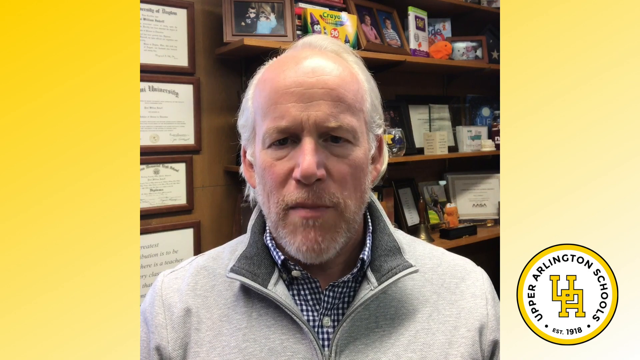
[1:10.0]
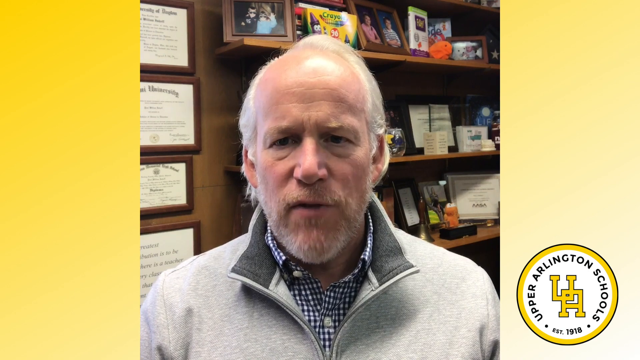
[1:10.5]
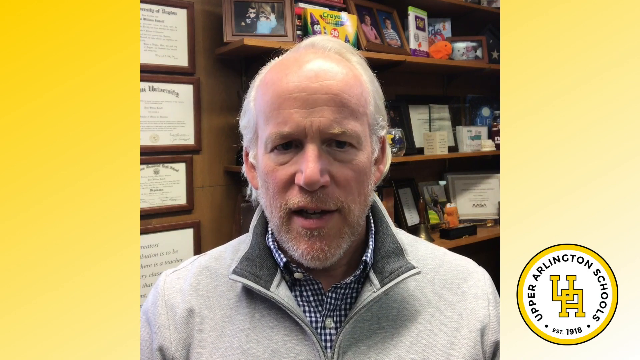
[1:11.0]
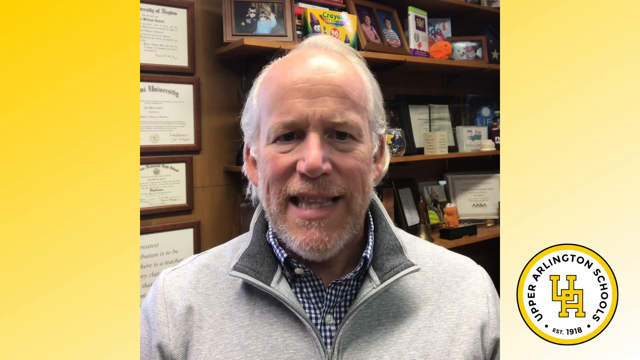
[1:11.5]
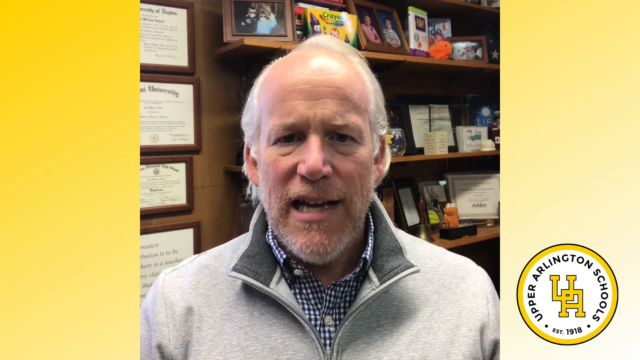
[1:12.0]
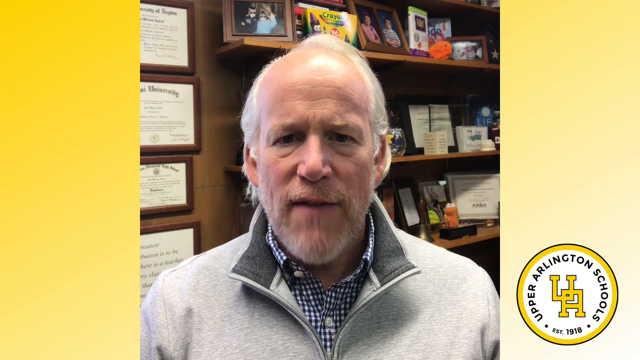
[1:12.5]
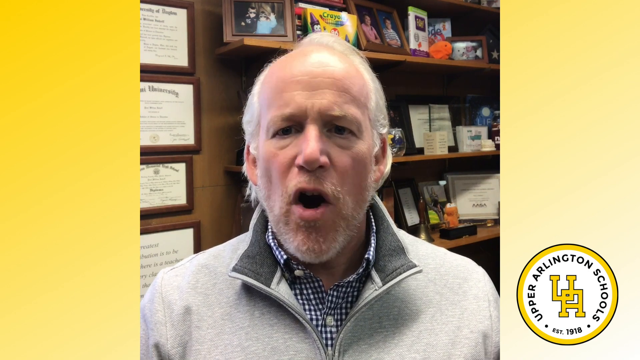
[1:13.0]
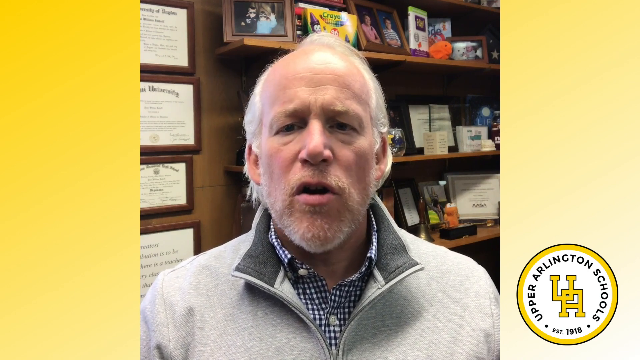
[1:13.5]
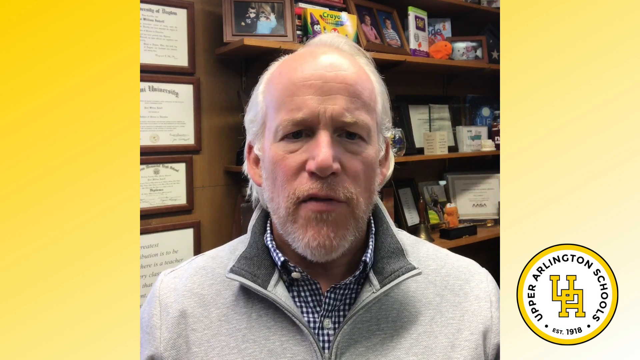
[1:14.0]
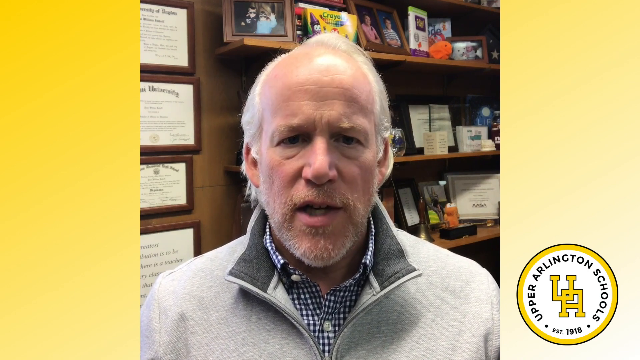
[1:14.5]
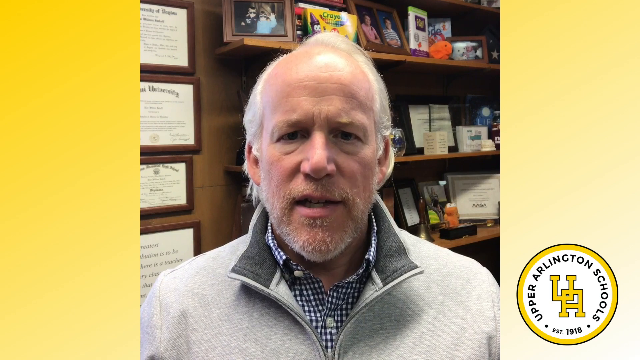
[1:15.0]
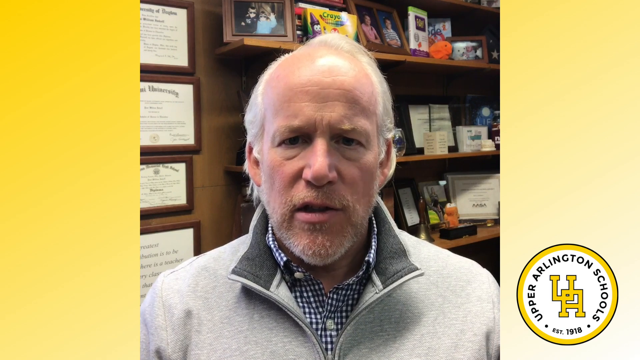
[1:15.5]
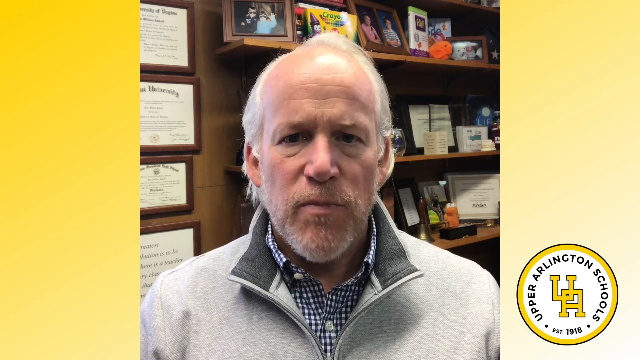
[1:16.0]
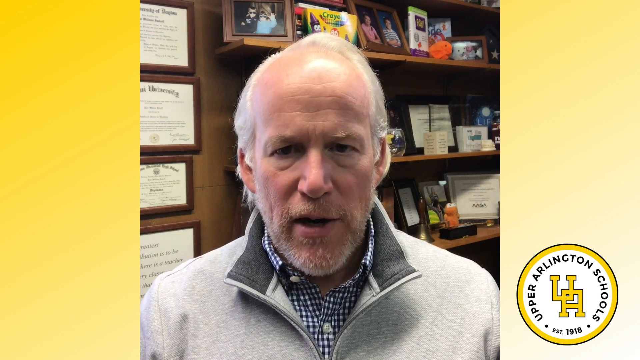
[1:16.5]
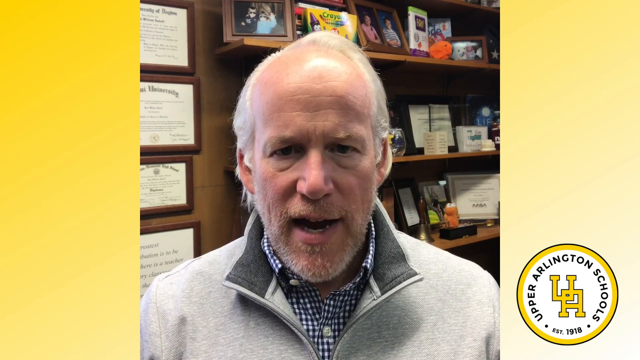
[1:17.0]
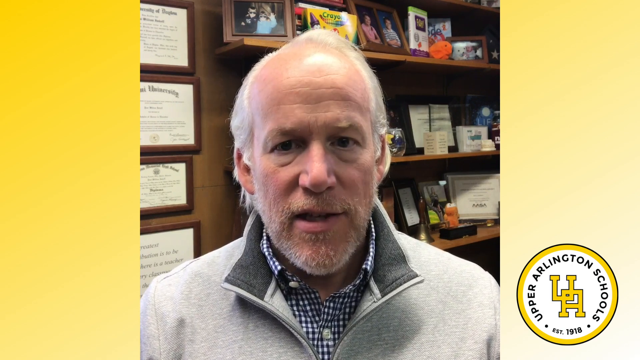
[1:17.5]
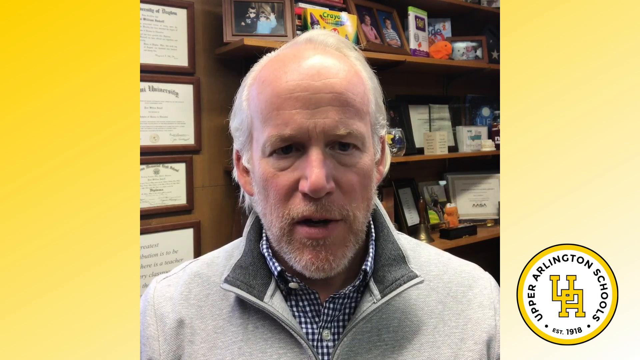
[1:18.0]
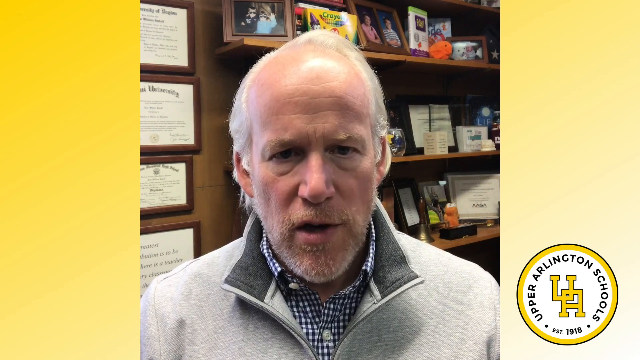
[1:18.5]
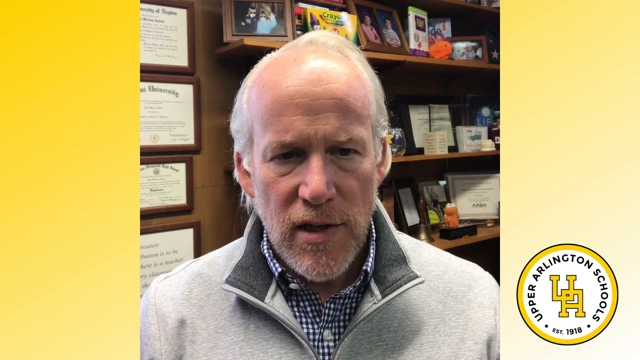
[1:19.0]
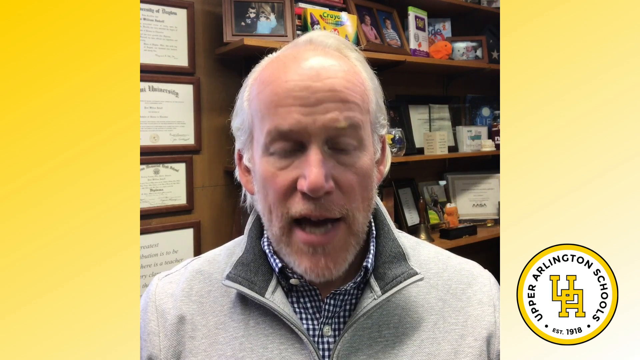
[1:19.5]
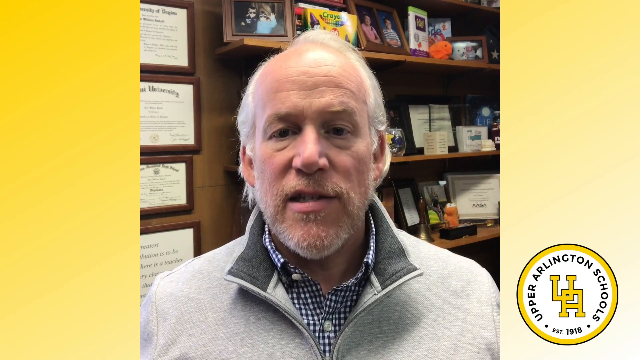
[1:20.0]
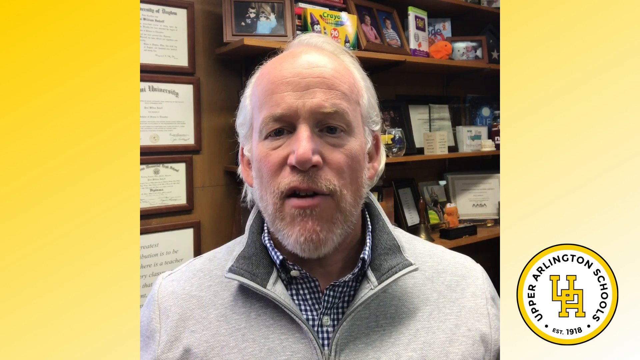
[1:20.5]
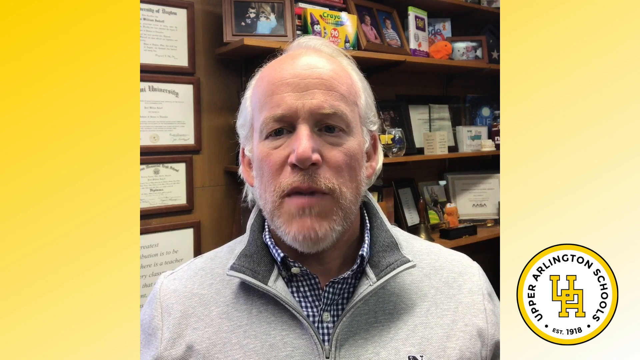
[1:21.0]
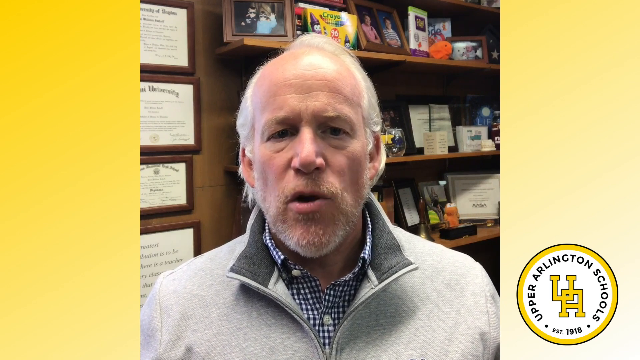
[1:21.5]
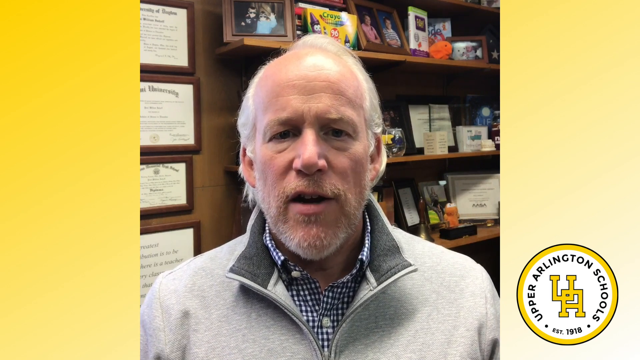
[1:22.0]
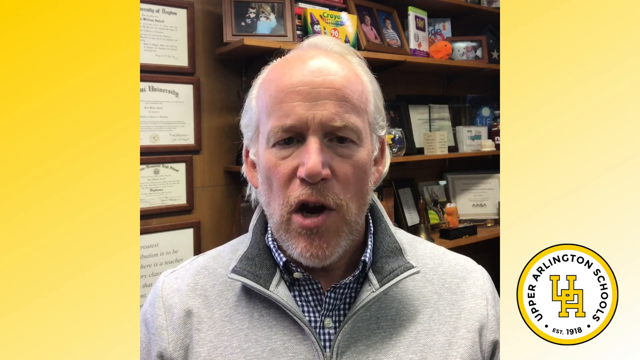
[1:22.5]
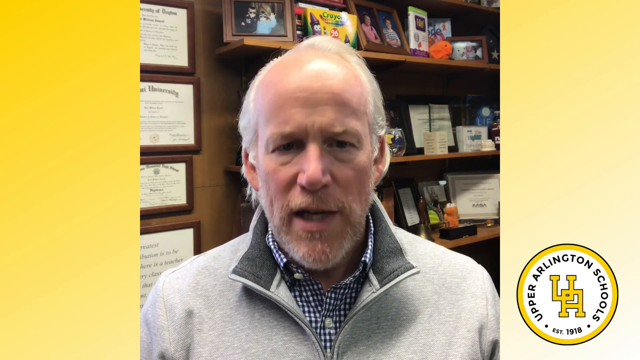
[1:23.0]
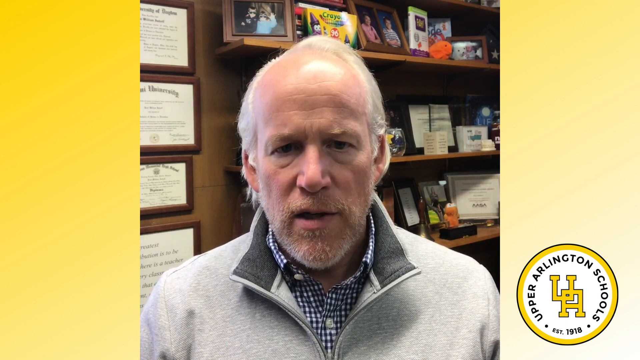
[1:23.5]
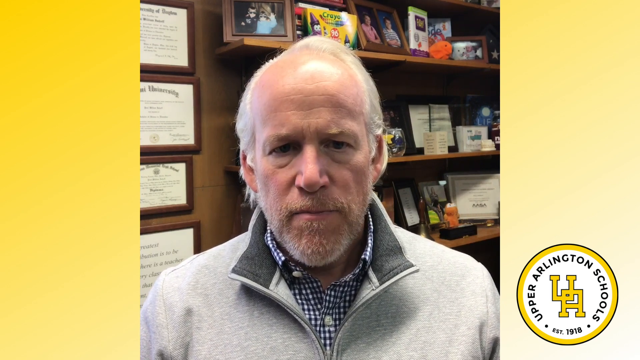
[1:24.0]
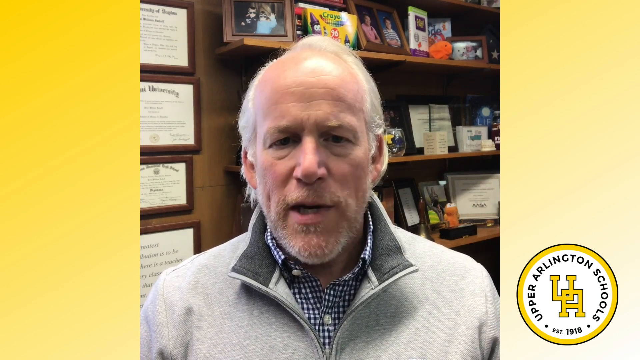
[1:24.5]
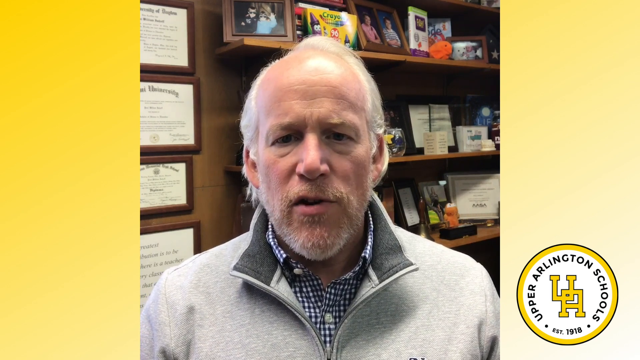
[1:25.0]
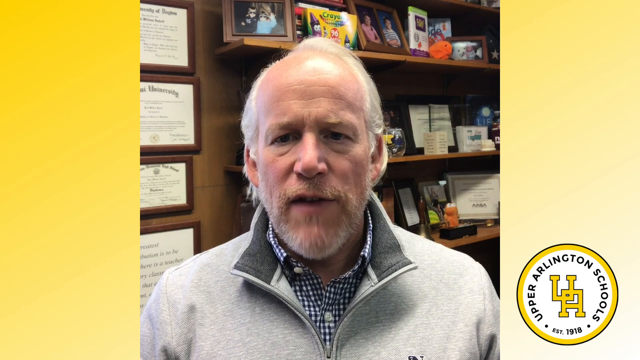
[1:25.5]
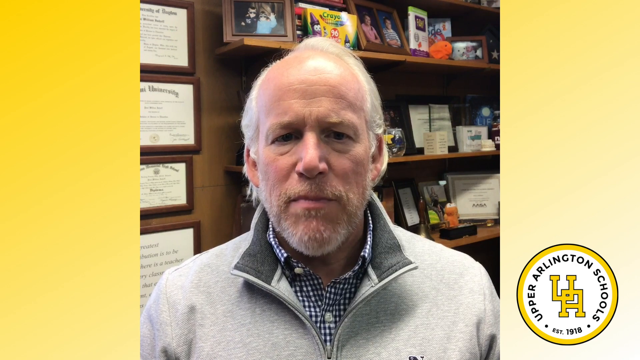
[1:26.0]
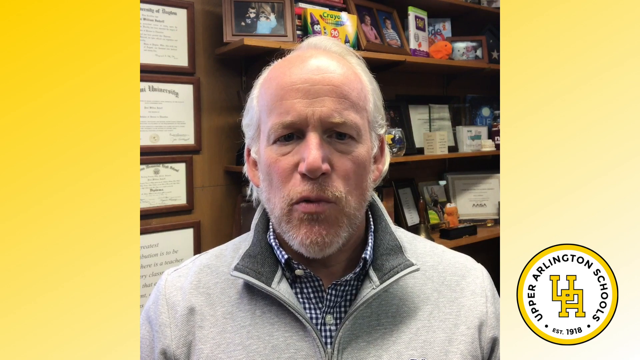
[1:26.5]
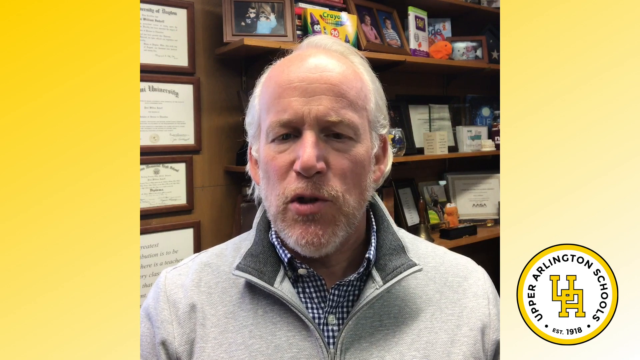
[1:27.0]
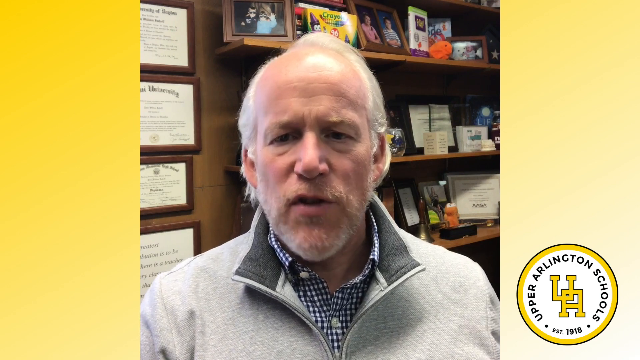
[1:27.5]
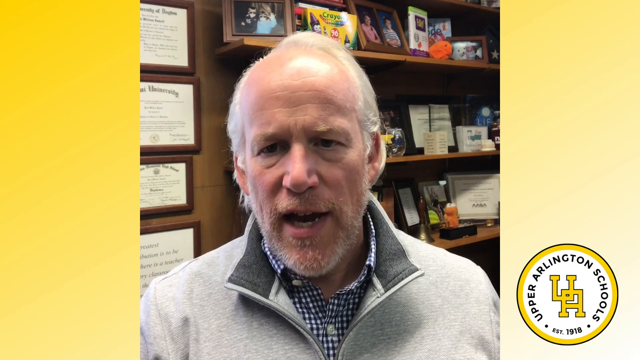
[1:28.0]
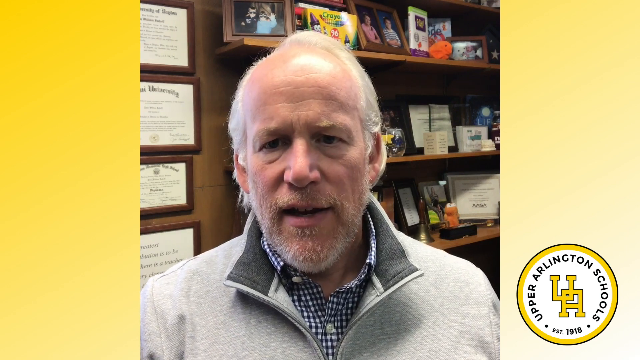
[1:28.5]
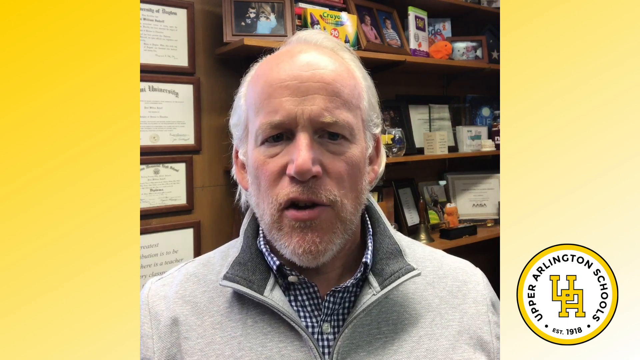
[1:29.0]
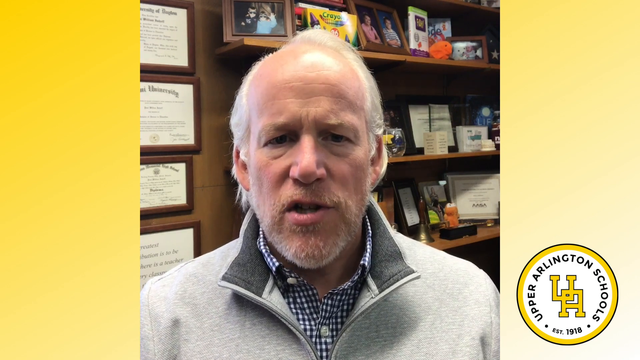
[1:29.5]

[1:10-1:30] The older man is shown against a yellow and white gradient background. In the corner is the school emblem, a circle with a bold black outline and a thicker yellow outline, reading "Upper Arlington Schools" with "EST" at the very bottom and "1918," plus a yellow U and a yellow A. Behind him are shelves holding pictures and what look like awards, with some diplomas or awards toward the left of the shelves. He is dressed in a gray jersey and a checkered shirt and talks to the camera, possibly addressing the parents of students at the school.